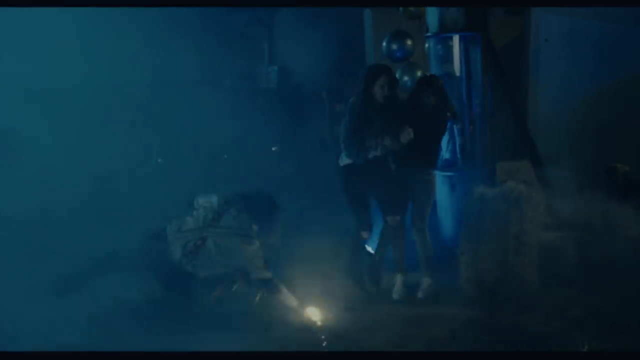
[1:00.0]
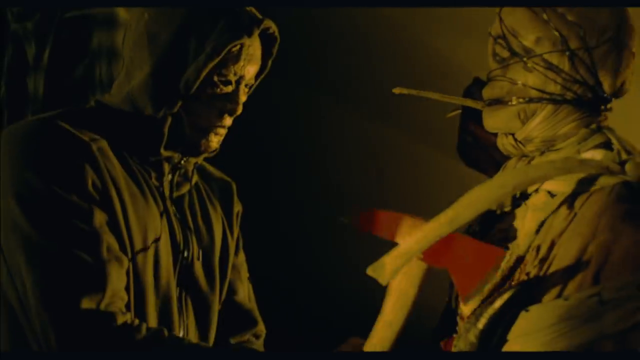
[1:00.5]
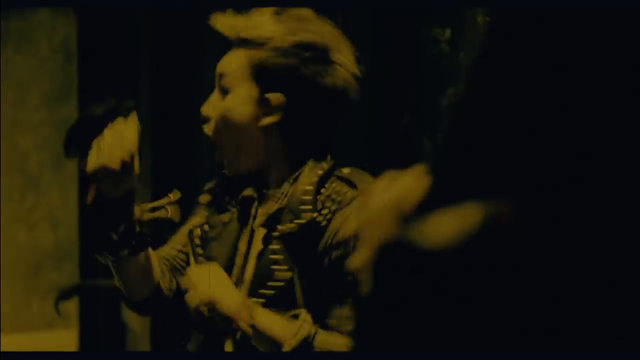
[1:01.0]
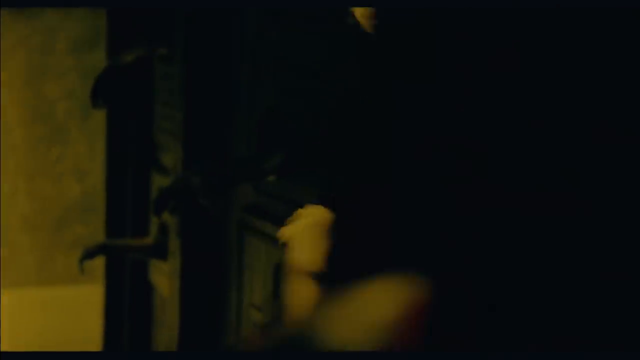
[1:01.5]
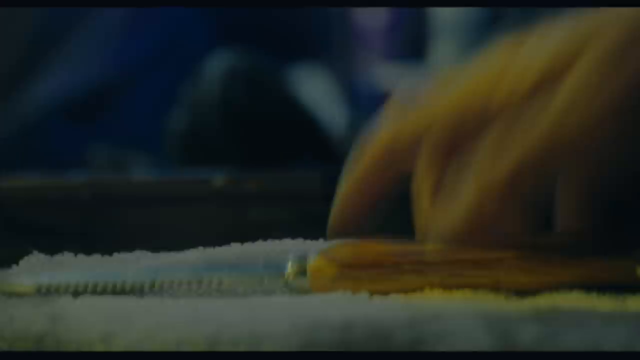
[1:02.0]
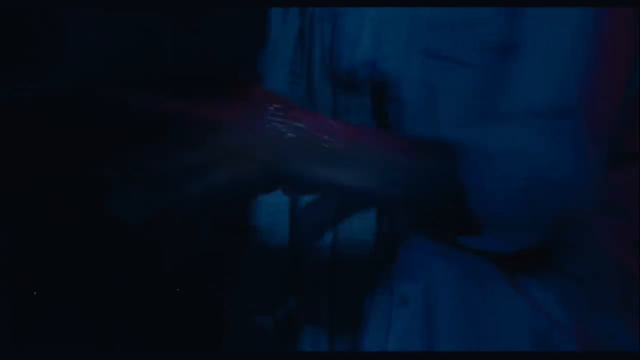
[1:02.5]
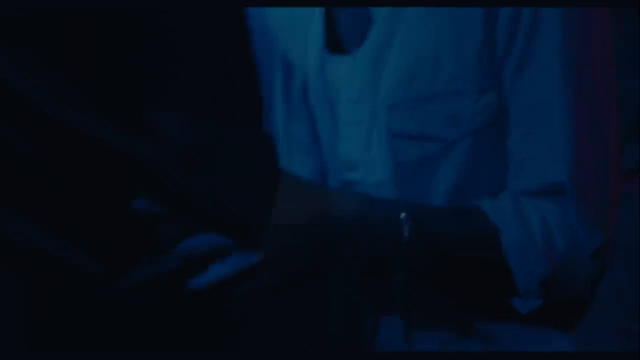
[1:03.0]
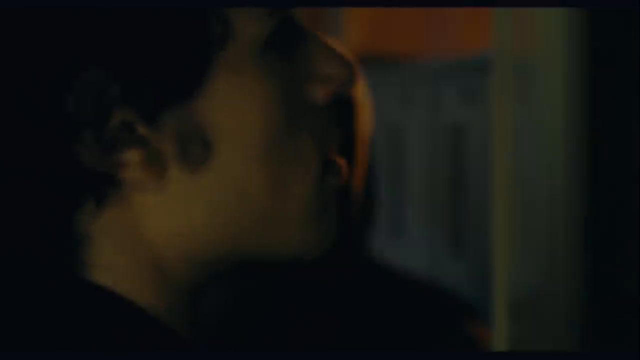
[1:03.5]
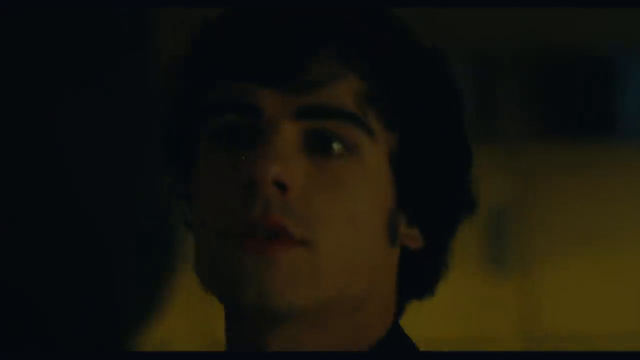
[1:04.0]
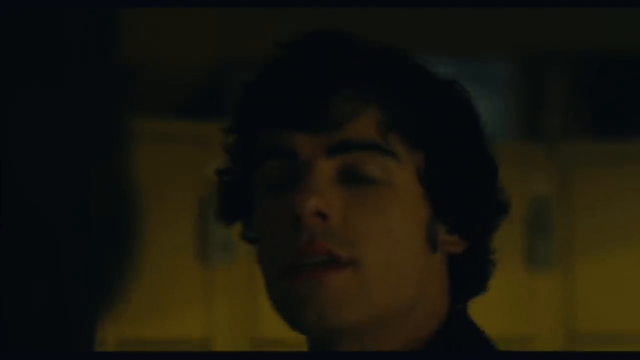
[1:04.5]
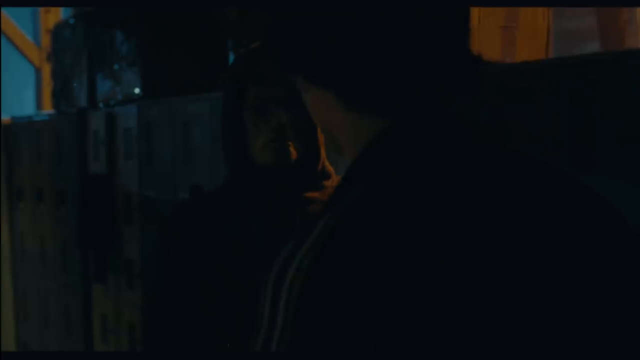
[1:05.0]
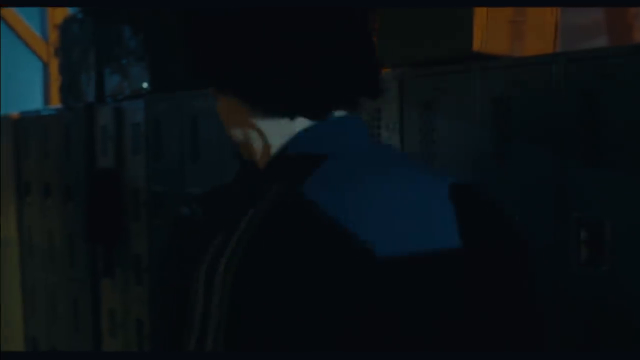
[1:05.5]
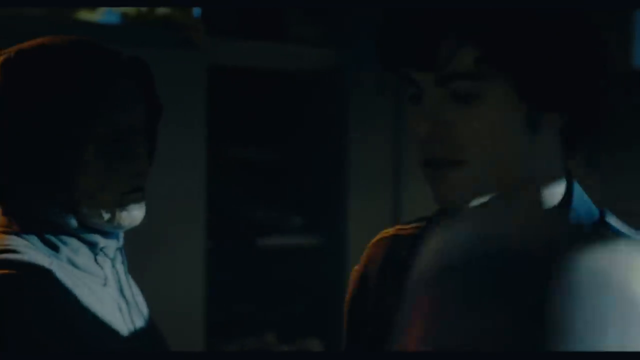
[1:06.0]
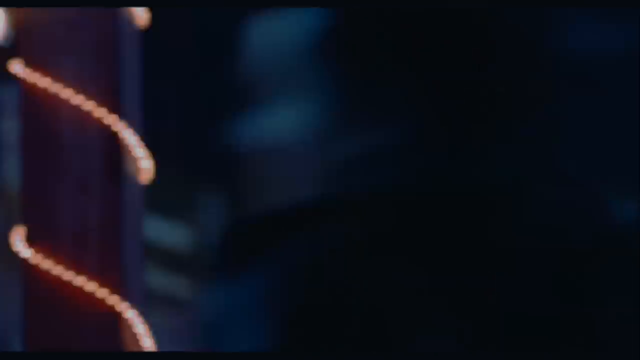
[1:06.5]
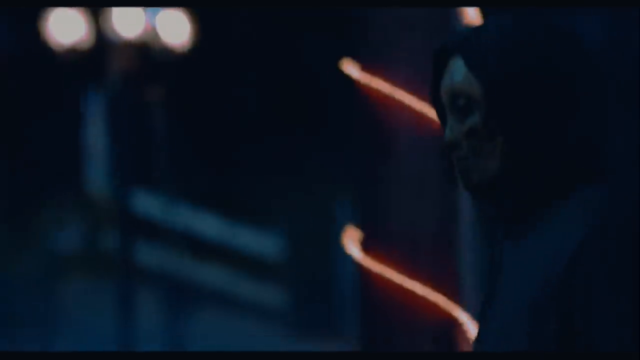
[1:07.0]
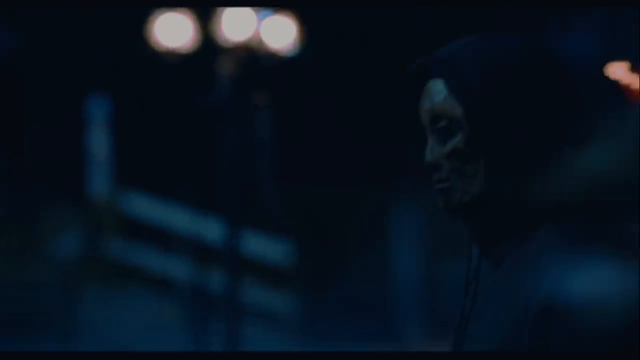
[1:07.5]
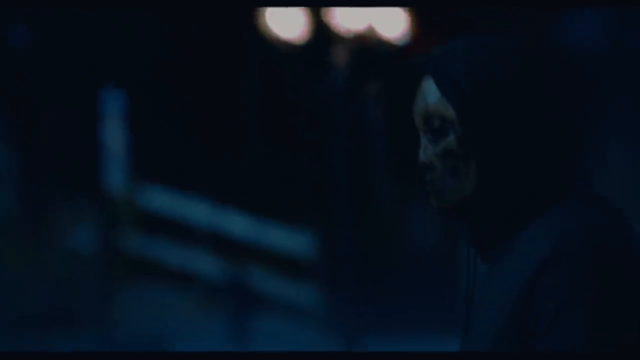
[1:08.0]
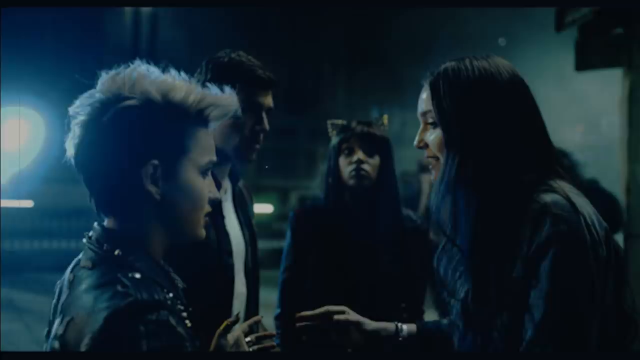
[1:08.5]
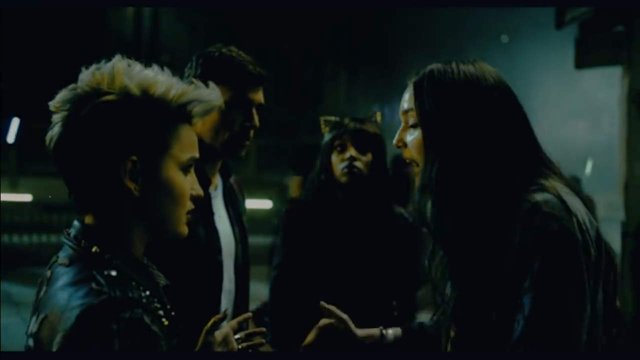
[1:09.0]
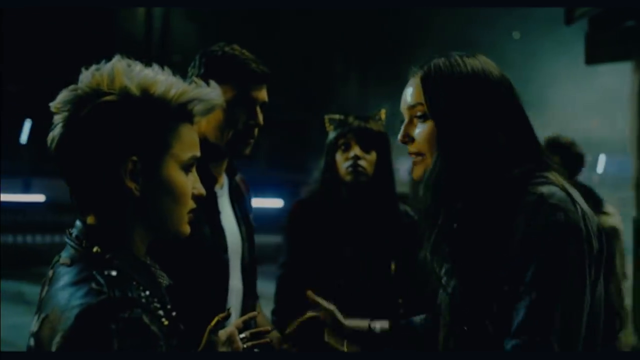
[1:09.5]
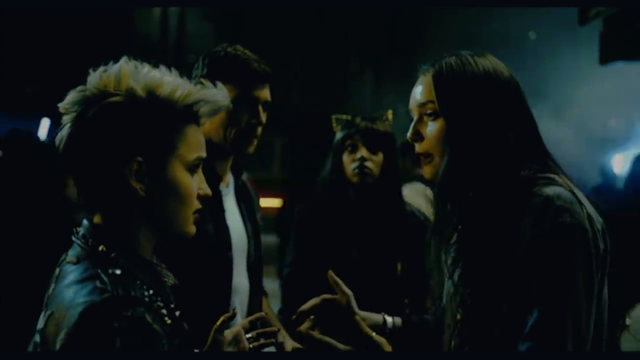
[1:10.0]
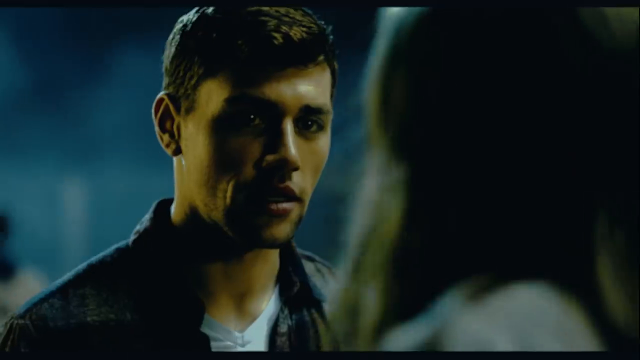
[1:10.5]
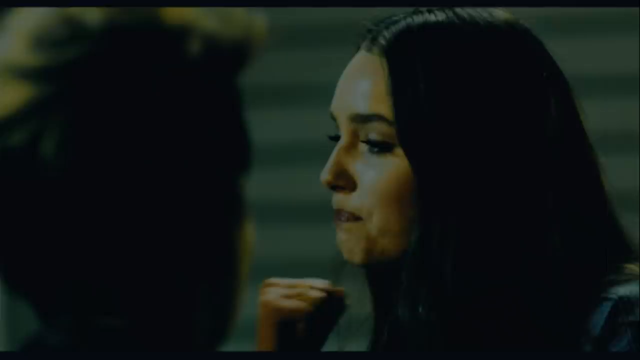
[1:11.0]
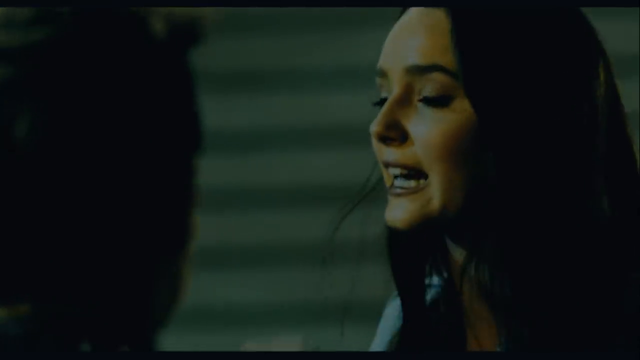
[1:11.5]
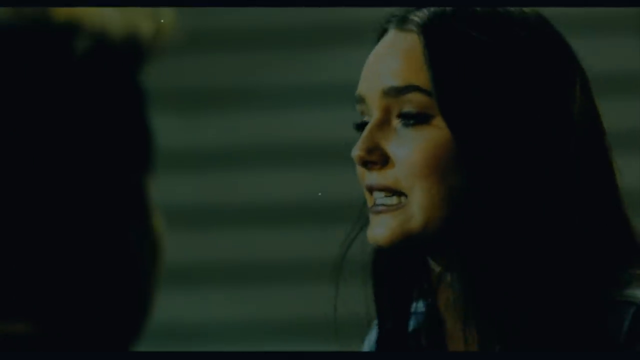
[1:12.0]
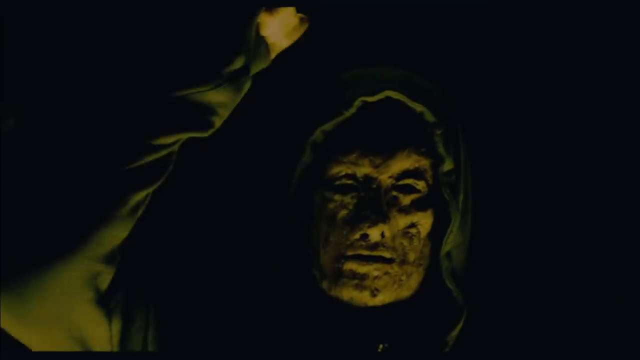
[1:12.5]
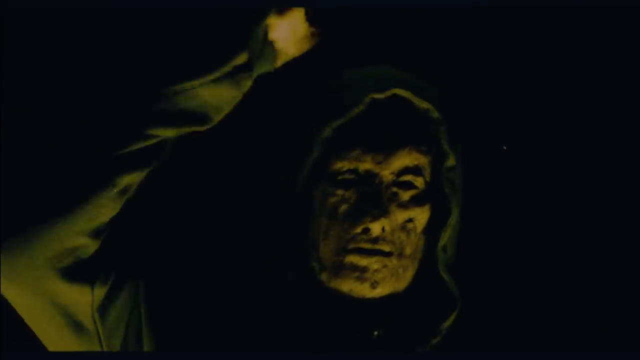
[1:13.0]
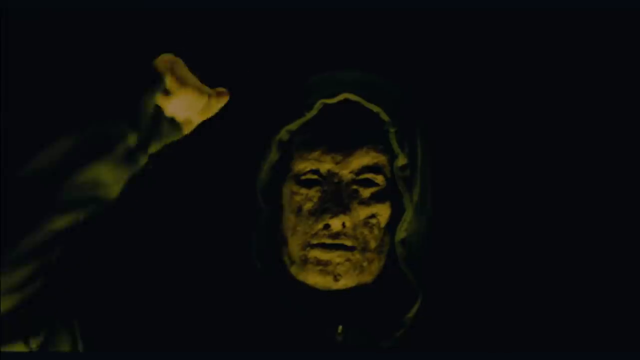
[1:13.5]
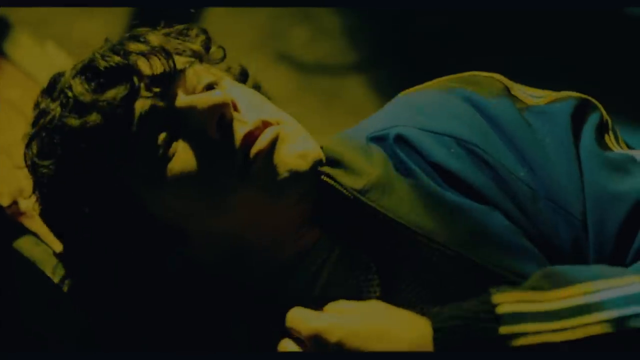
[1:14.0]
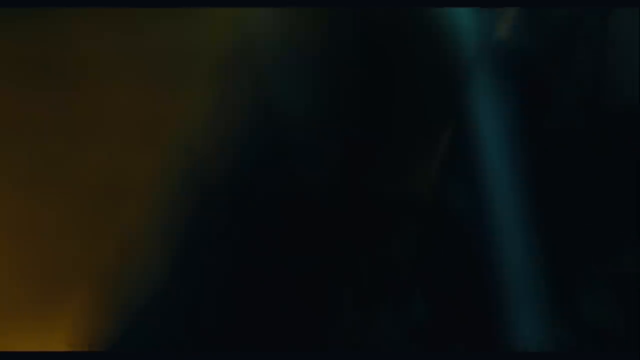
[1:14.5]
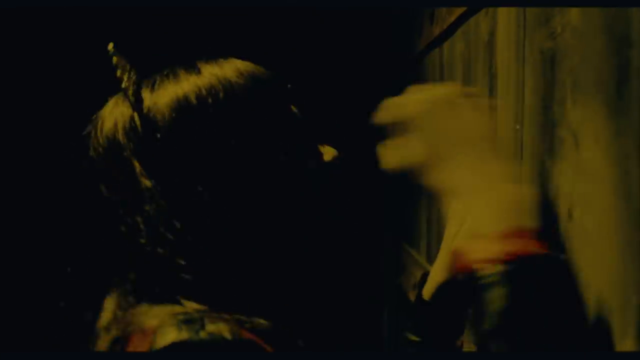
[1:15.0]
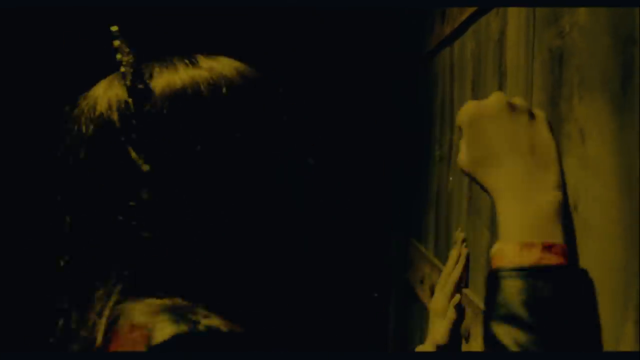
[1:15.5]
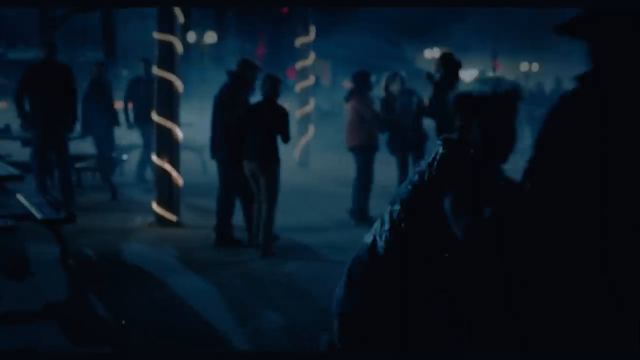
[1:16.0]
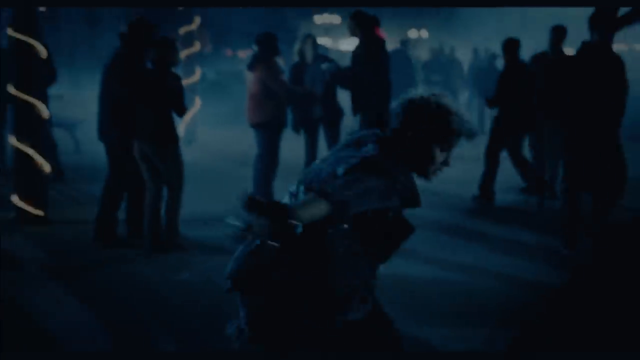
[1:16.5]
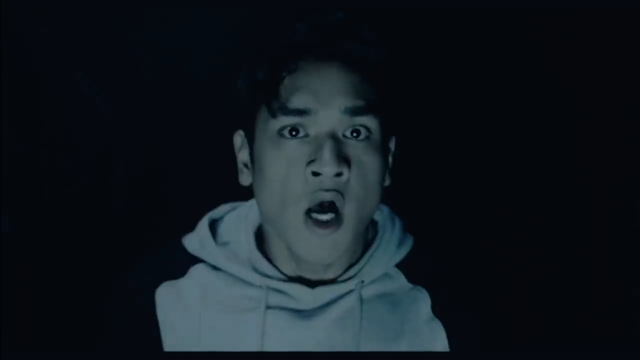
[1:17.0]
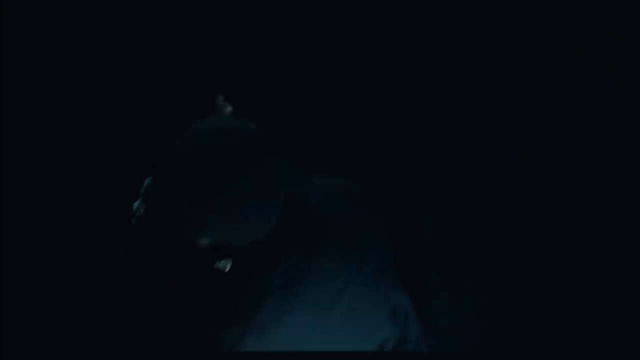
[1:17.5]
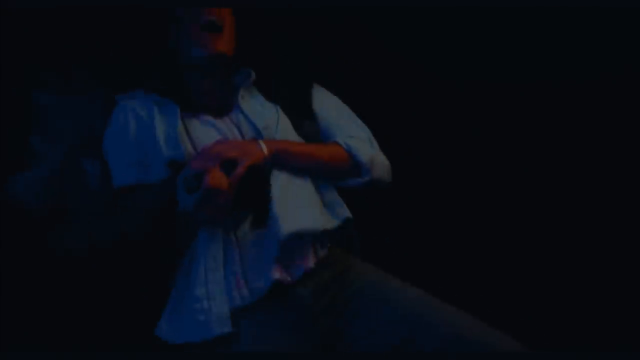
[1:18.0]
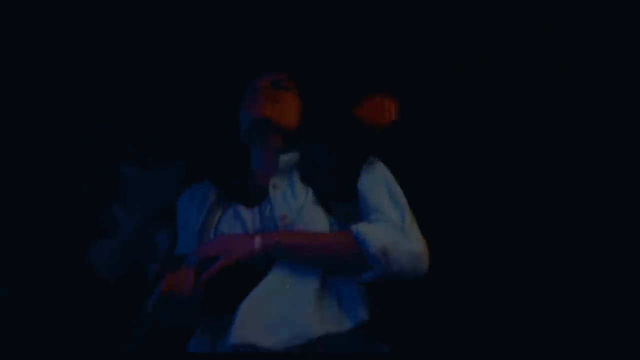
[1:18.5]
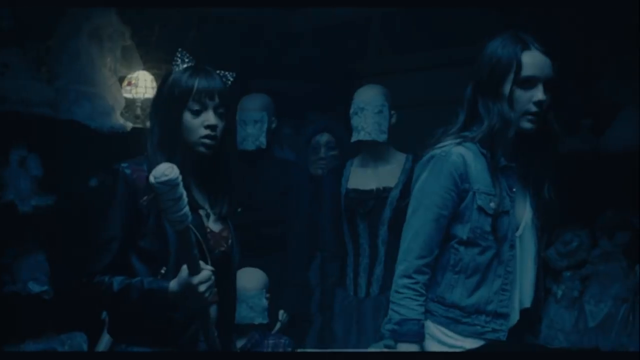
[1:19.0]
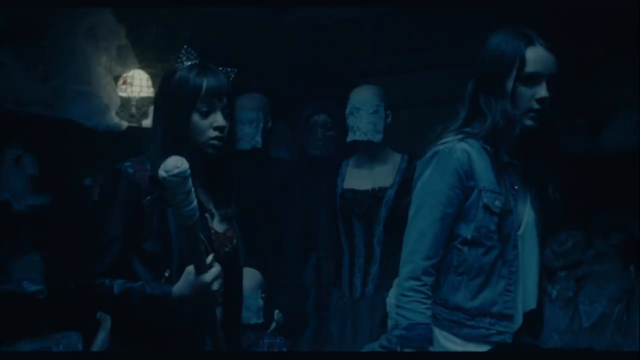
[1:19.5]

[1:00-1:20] In a very hazy space that is hard to see, the people appear to be running. The scene switches to the guy in the hoodie with the mask, and then another scary-looking character. One of the girls who earlier looked like she was having fun appears, and then a knife is shown and somebody is stabbed. A kid seen earlier walks out a door where a really creepy-looking person scares him; he gets scared and then keeps walking. The people who earlier looked like they were having fun are kind of in a group talking; one of the girls kind of looks angry while the others just listen. A view of the guy in the hoodie follows, as if he has stabbed someone. A girl wearing a cat ears headband bangs on a door to get out, and then another girl runs through a crowd.